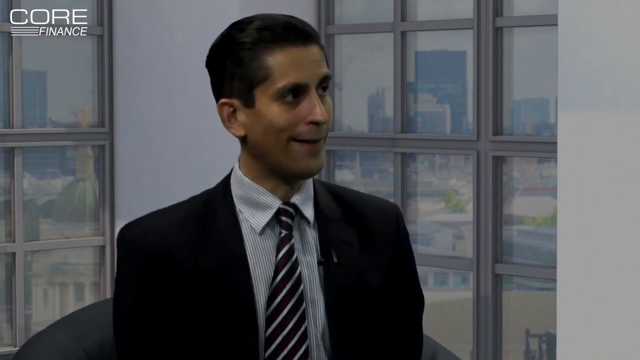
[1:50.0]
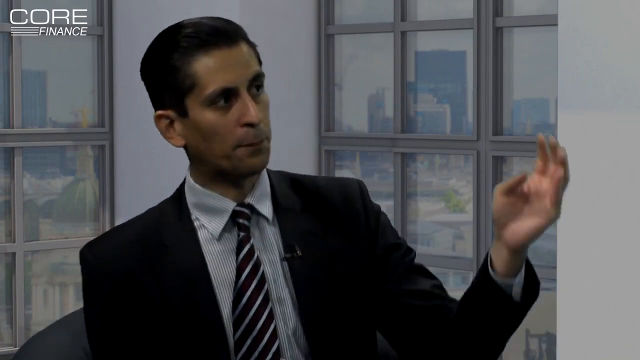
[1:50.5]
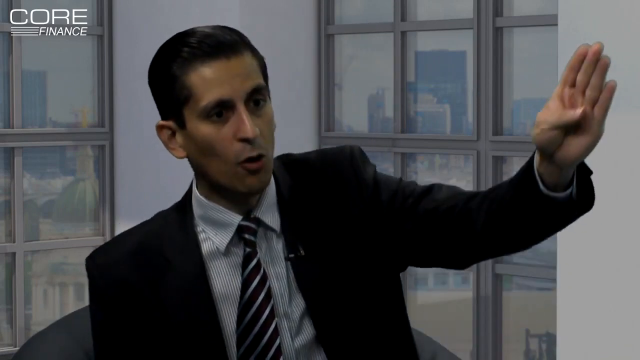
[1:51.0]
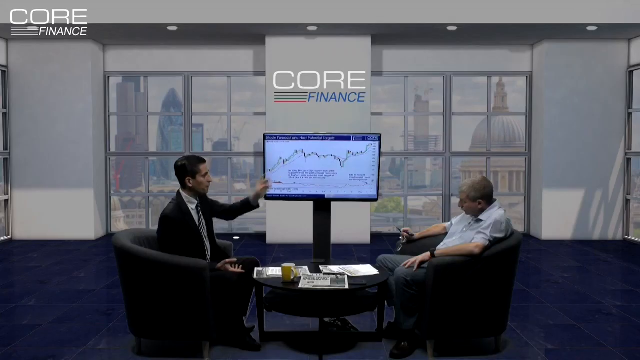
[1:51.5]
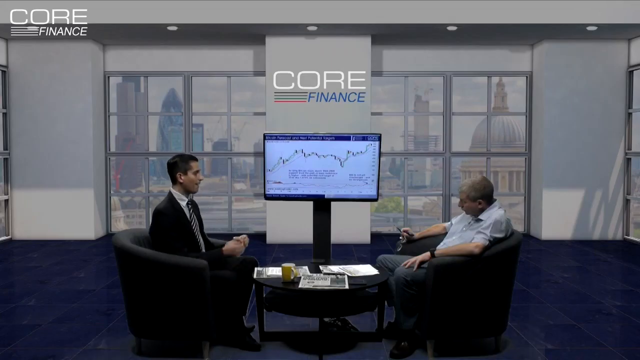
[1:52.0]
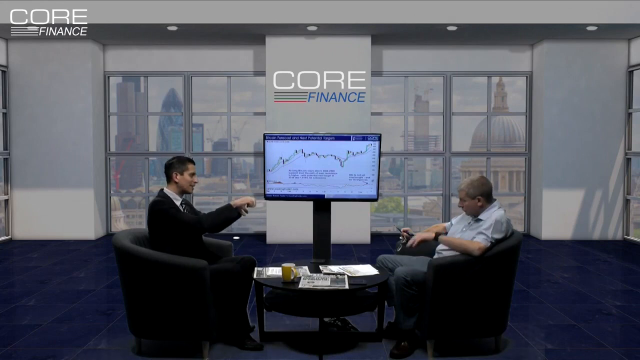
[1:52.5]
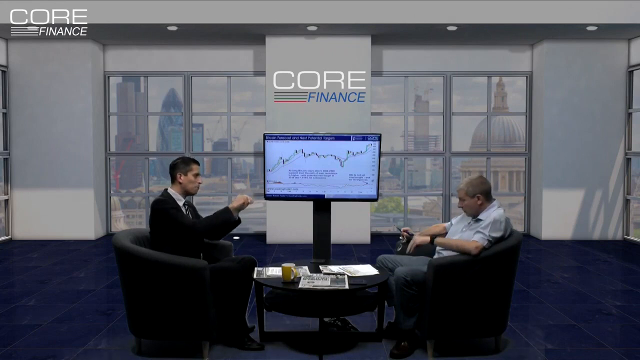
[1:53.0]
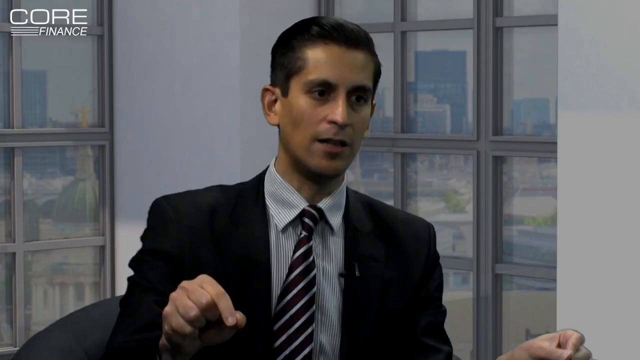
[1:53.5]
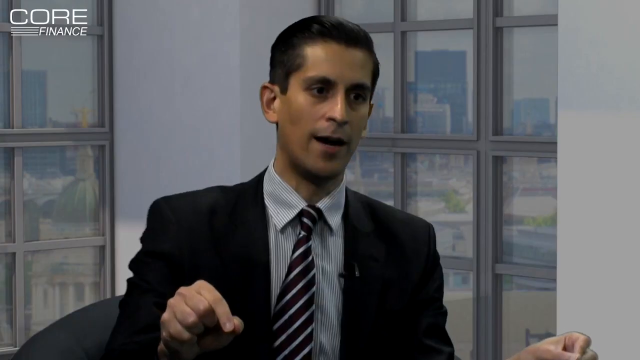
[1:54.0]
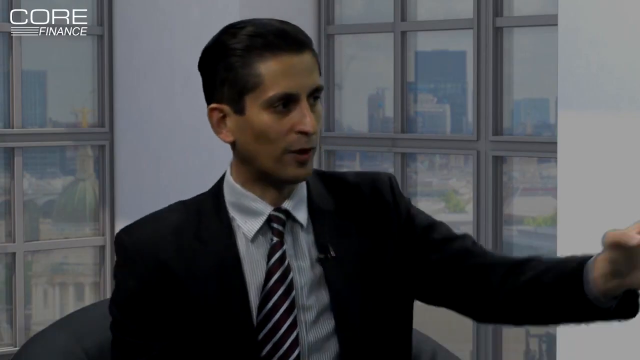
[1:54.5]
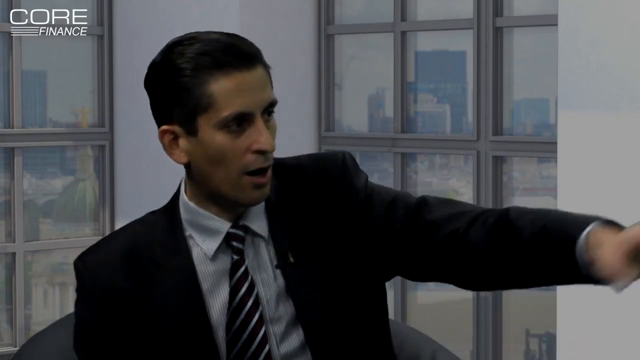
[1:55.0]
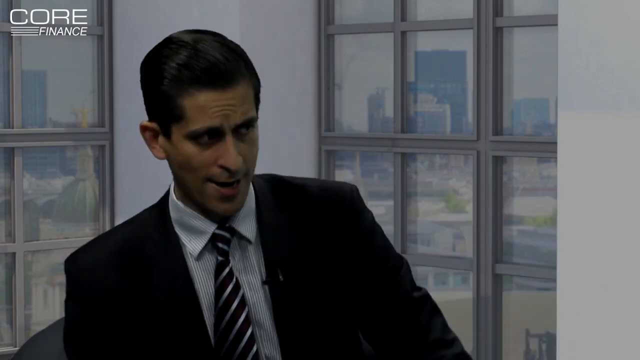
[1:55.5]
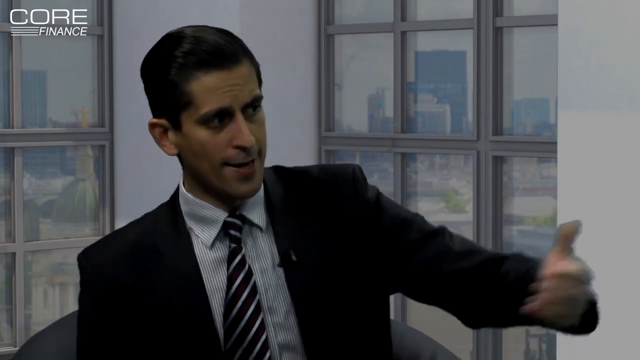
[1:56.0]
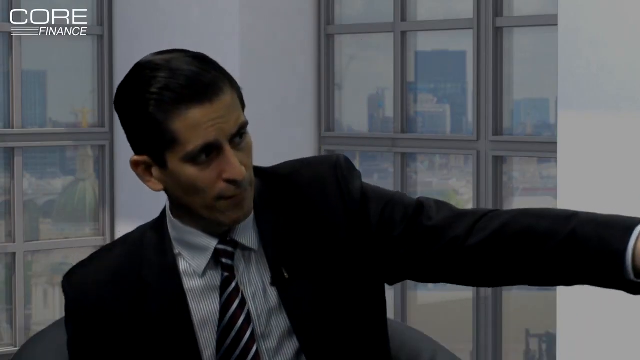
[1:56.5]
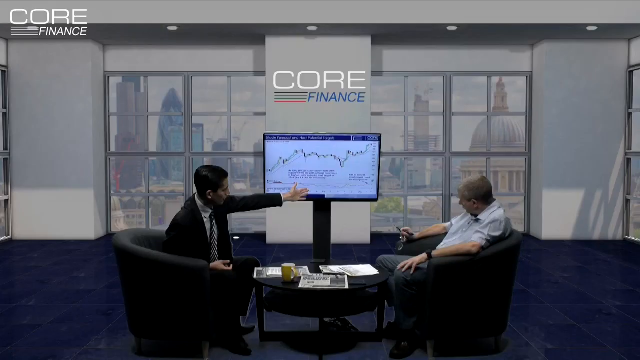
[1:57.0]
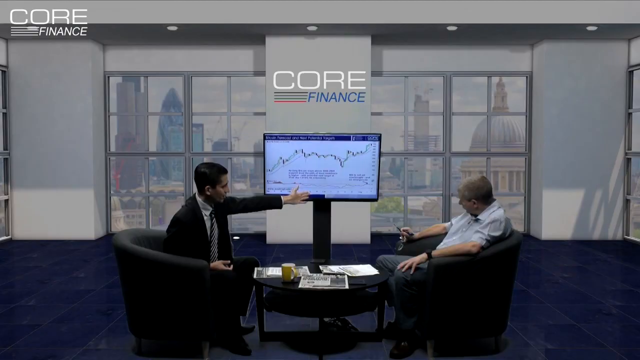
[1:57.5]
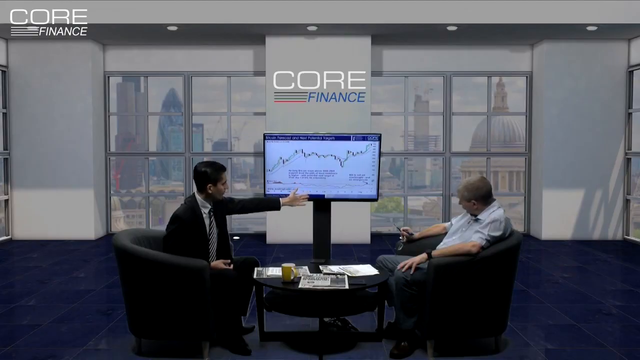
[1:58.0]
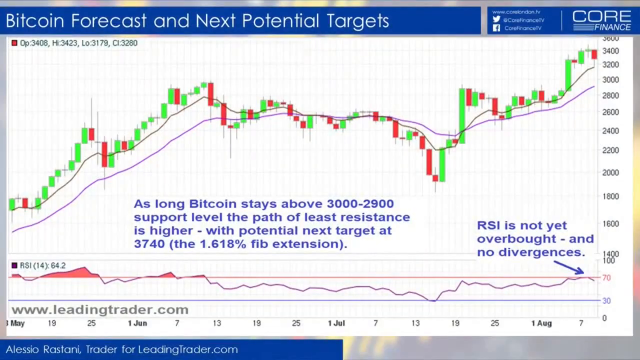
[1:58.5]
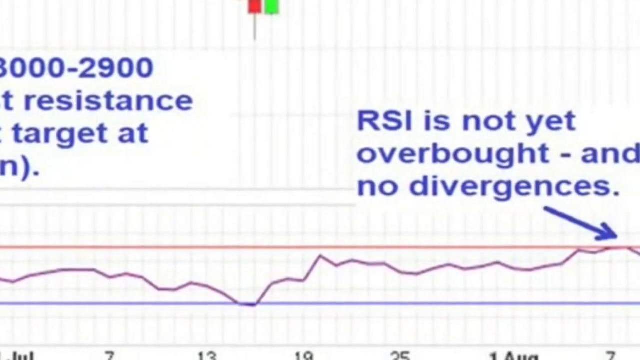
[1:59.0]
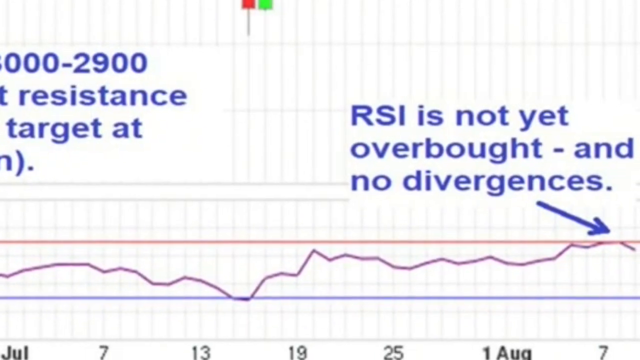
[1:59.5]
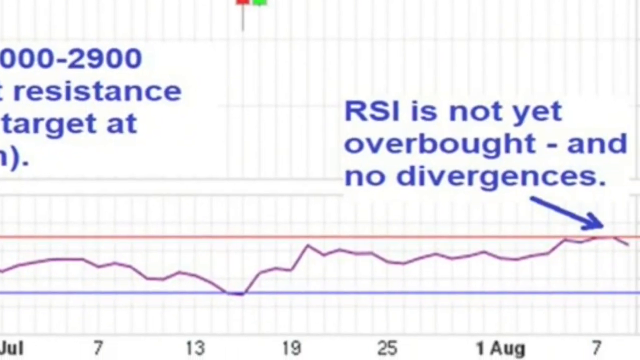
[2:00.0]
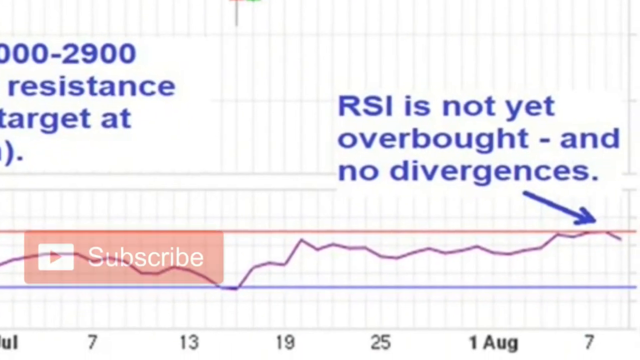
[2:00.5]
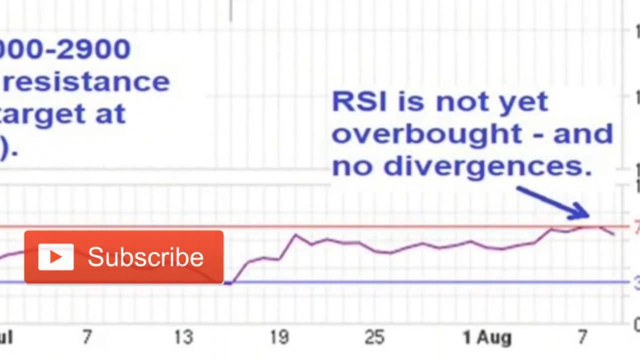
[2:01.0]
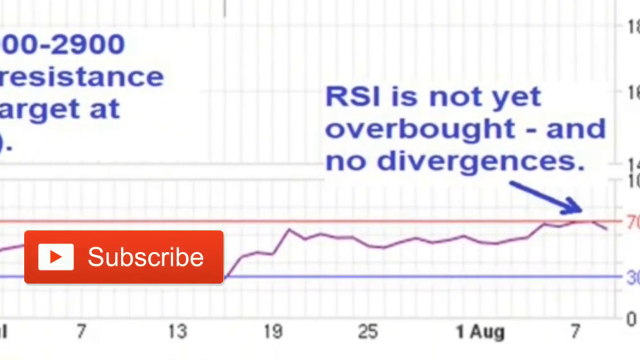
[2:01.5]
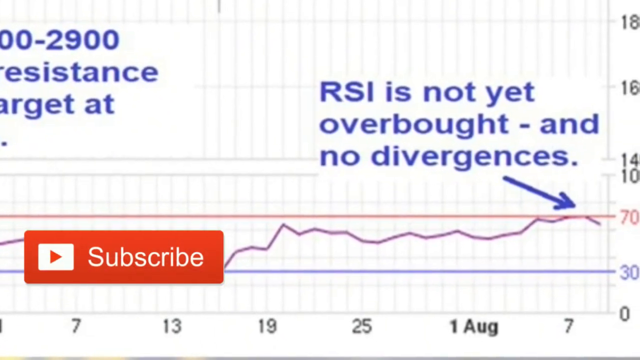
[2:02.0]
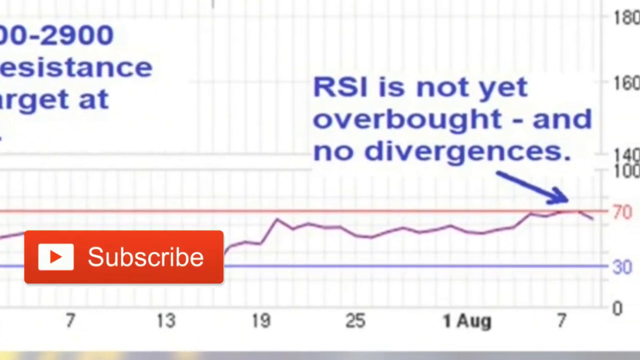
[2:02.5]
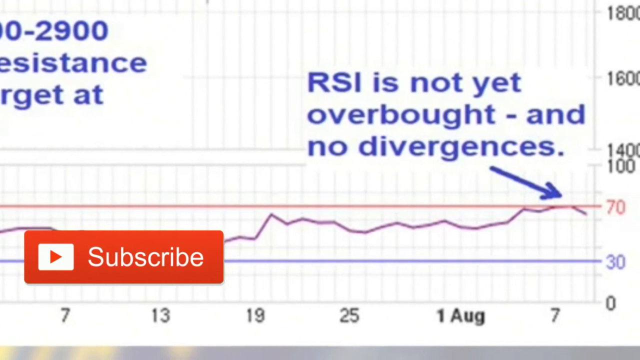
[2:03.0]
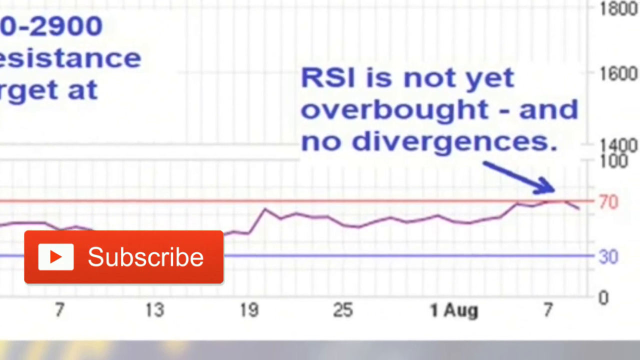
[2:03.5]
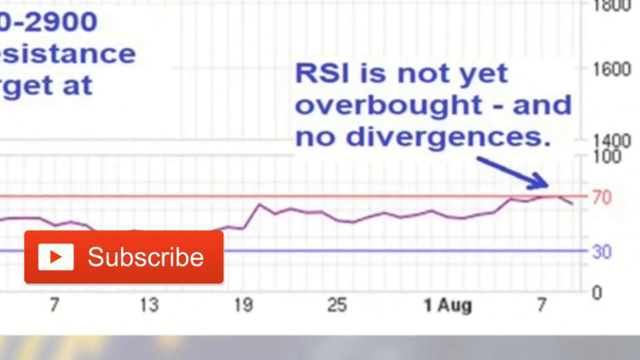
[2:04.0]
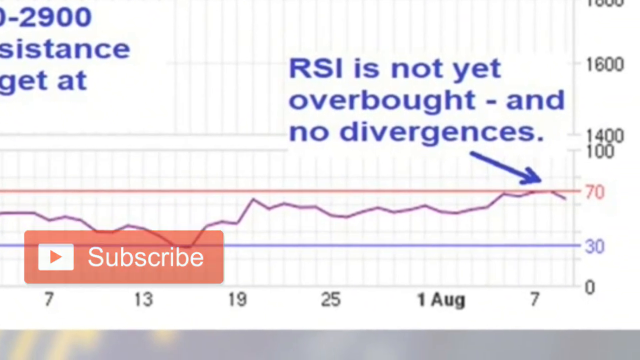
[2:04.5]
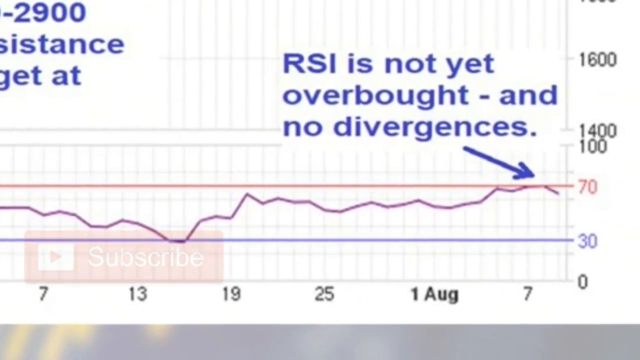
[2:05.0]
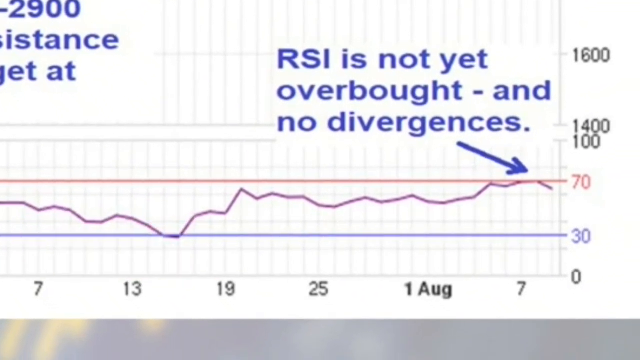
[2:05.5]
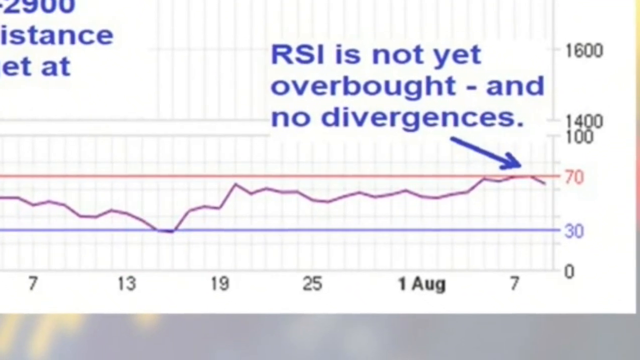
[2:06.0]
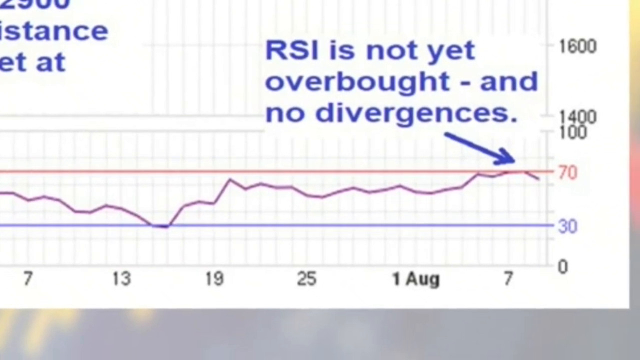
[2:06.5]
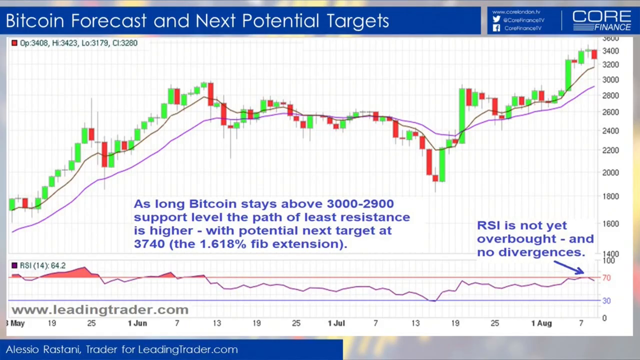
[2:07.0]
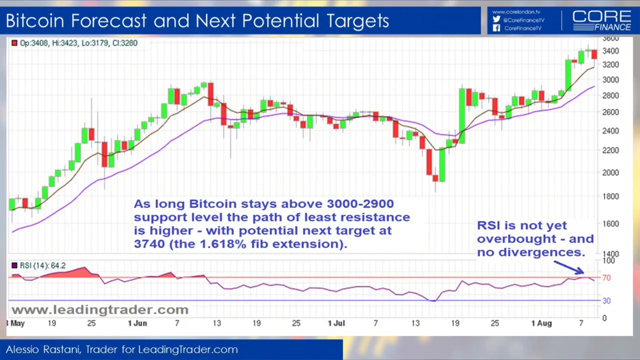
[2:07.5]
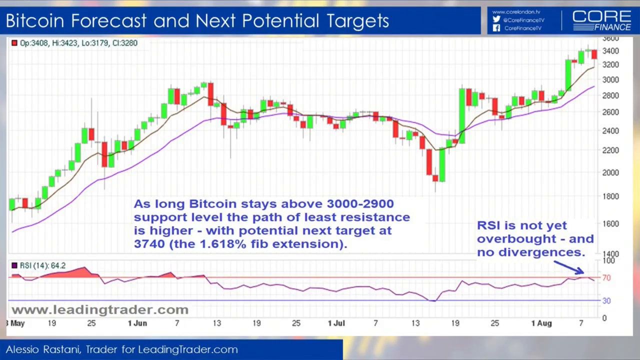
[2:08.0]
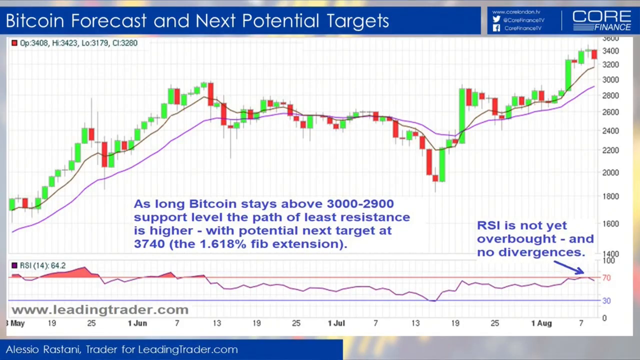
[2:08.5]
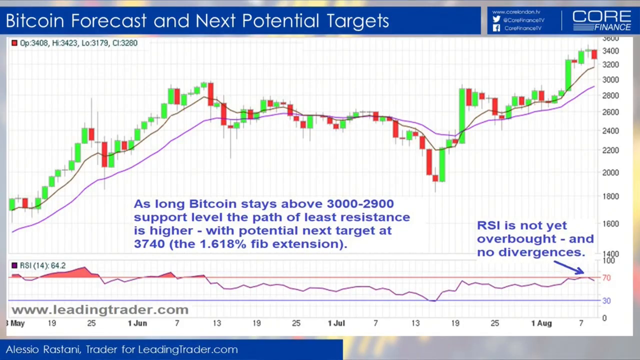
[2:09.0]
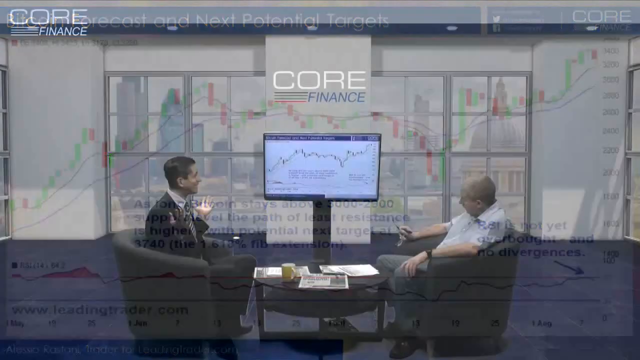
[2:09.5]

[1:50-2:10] The two continue the conversation about the Bitcoin market trend. A close-up of the RSI shows the text "RSI is not overbought". The RSI line graph is between 70 and 80 and crosses the 70 mark line slightly, but only at the beginning. The candlesticks are red and green and vary in size, some closing high and some closing on the lows, with different higher highs and lower lows. The text written on the chart is blue, and the RSI section has an arrow pointing to the peak of the line graph that slightly touches the 70 mark line. In this scene, the person constantly talking is the one in the black suit.